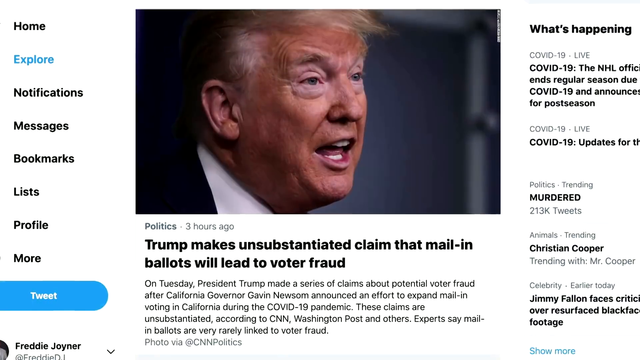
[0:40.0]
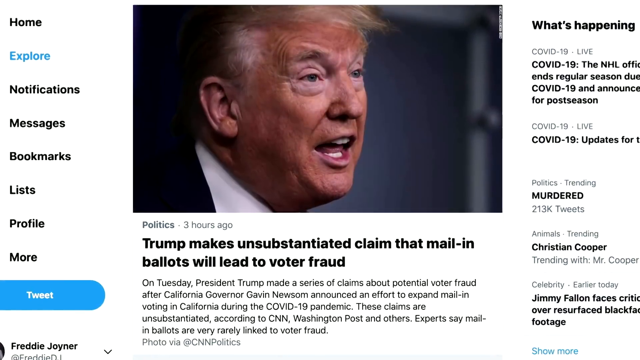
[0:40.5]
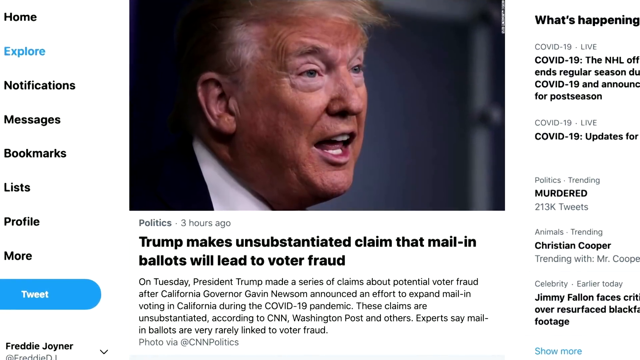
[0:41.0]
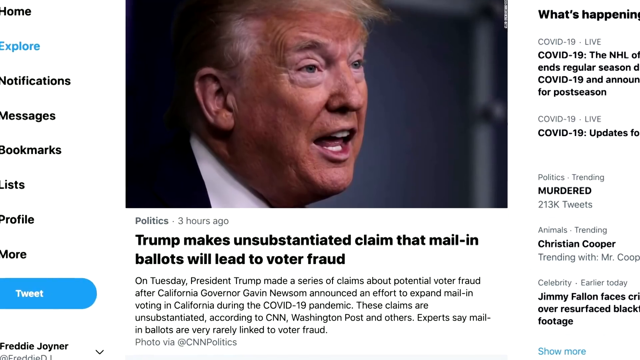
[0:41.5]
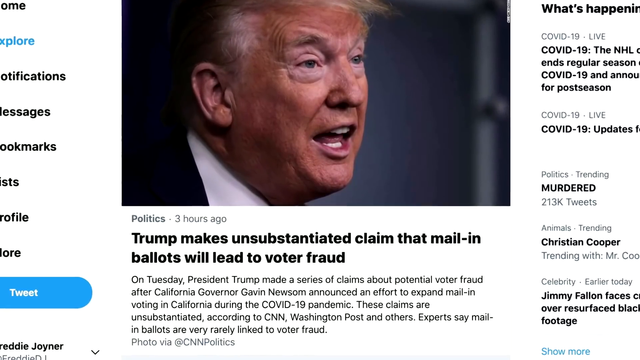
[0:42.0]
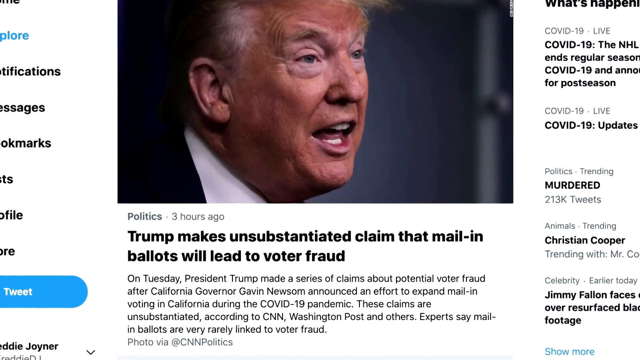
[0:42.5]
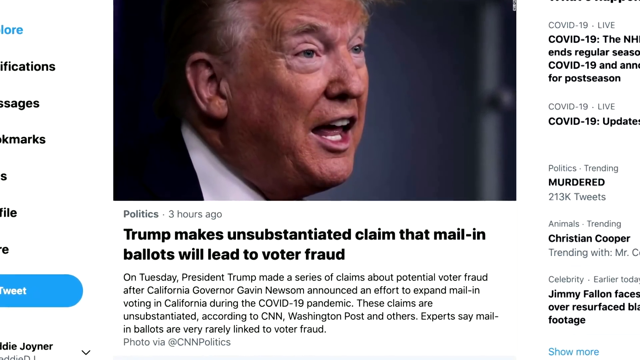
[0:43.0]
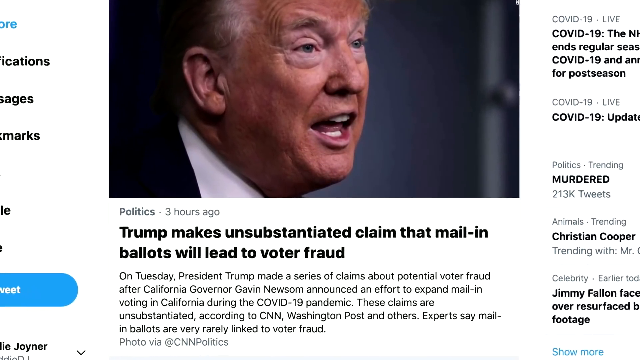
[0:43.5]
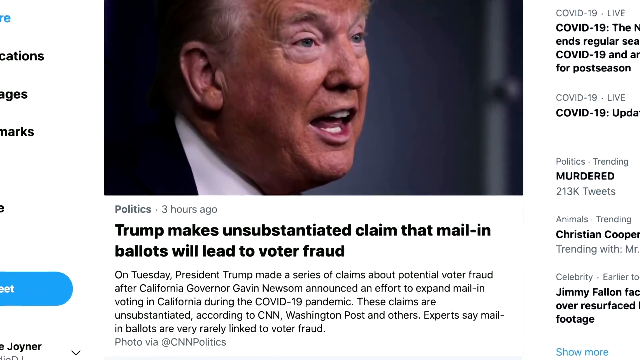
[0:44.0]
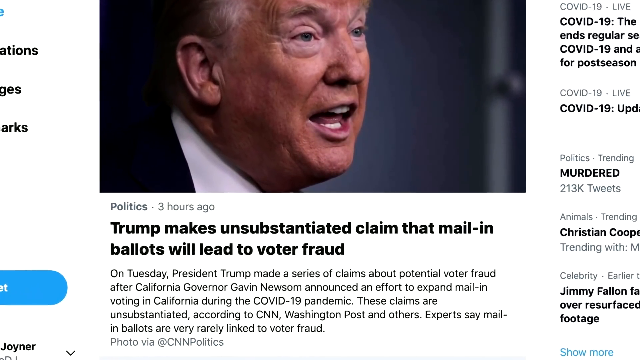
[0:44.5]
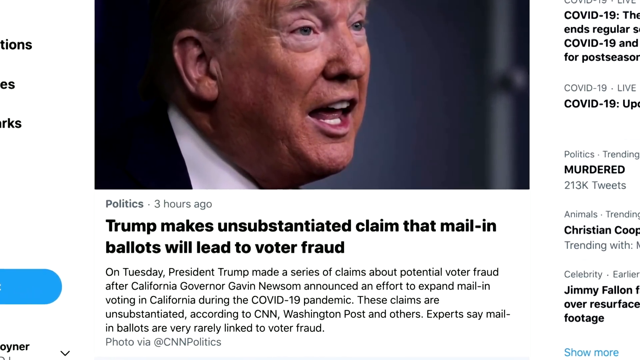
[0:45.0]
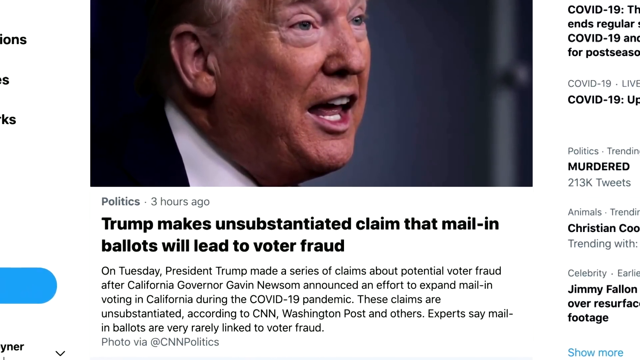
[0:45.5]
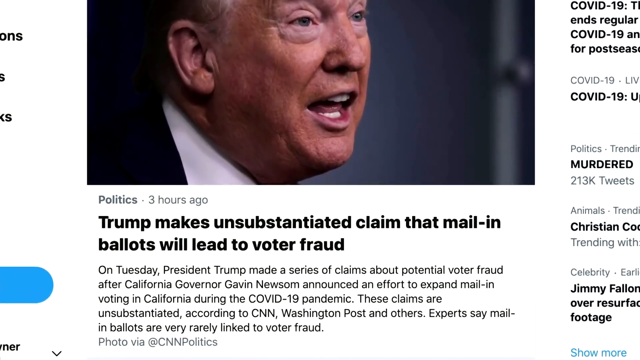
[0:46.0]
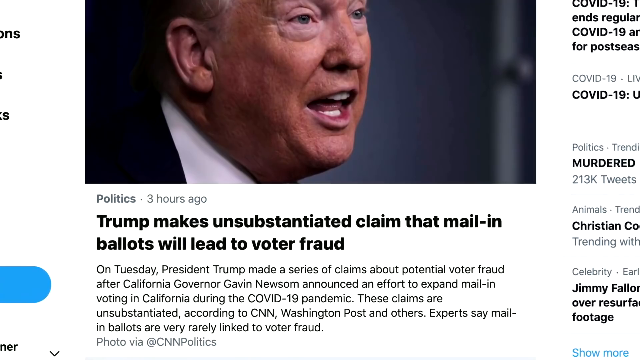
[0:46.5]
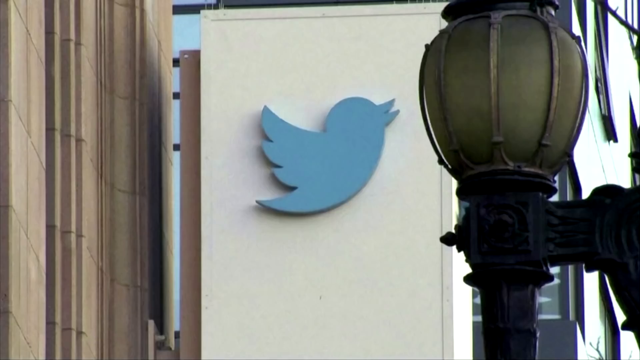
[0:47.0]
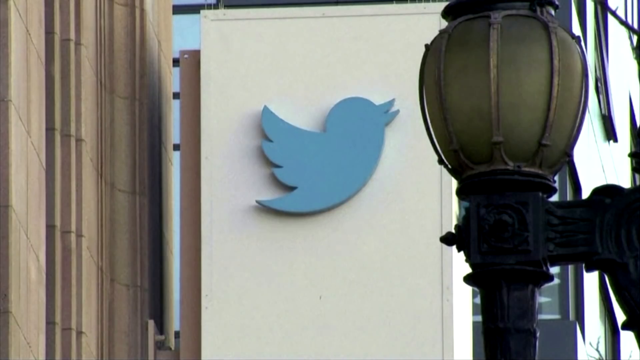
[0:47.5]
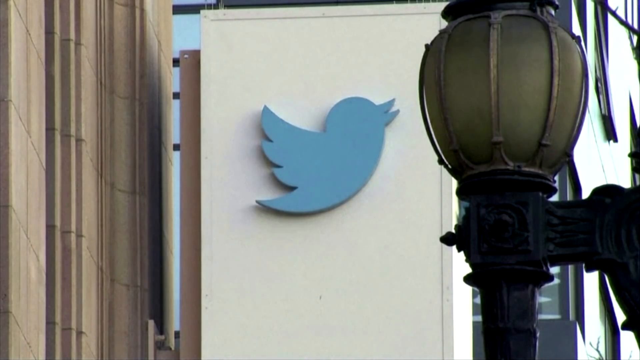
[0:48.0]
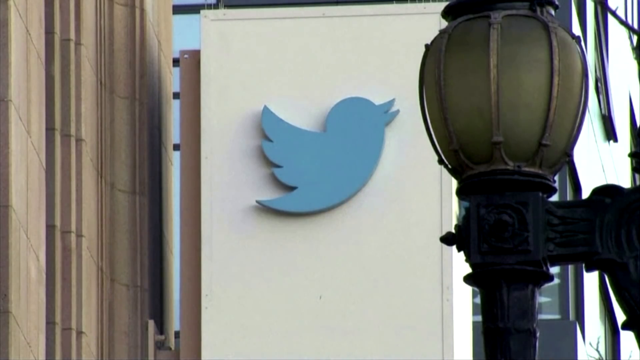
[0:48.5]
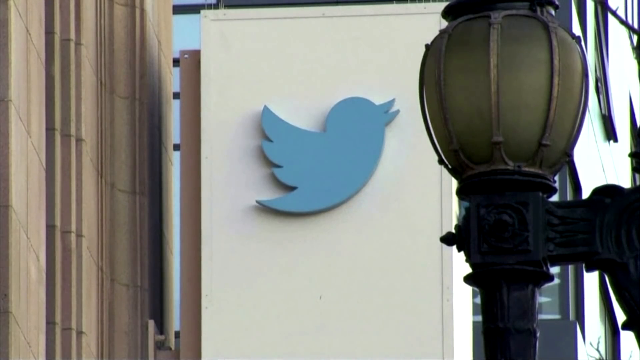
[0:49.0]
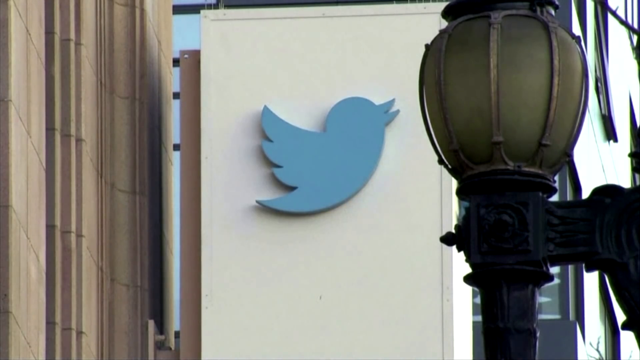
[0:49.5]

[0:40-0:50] On Twitter, a politics article shows a picture of Donald J. Trump. Underneath it, black letters read: "Trump makes an unsubstantiated claim that mail-in ballots will lead to voter fraud." Below that, the text reads: "On Tuesday, President Trump made a series of claims about potential voter fraud over California Governor Gavin Newsom, announced an effort to expand mail-in voting in California during the COVID-19 pandemic. These claims are unsubstantiated according to CNN, Washington Post, and others."